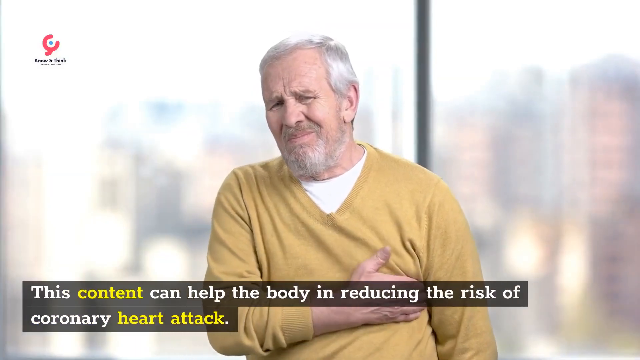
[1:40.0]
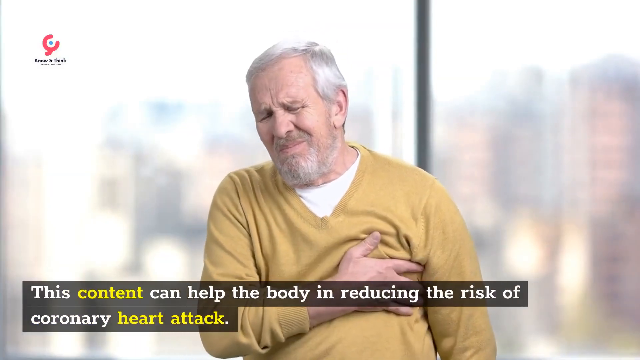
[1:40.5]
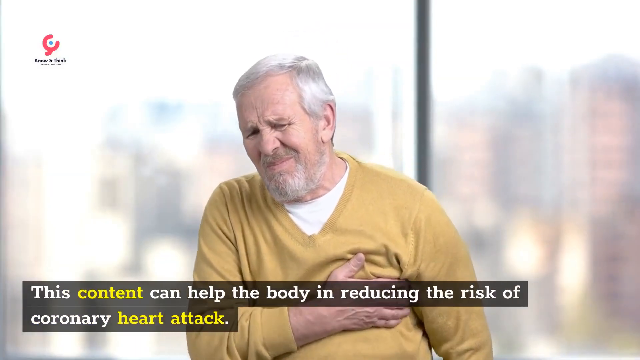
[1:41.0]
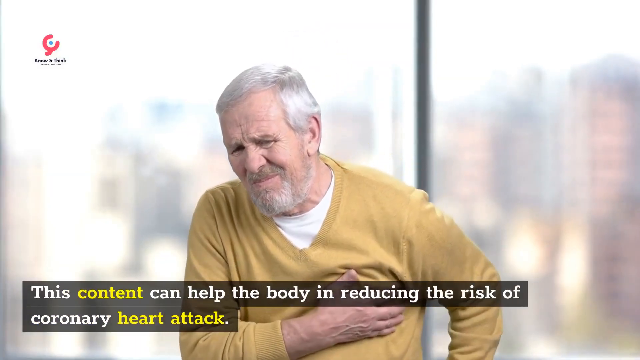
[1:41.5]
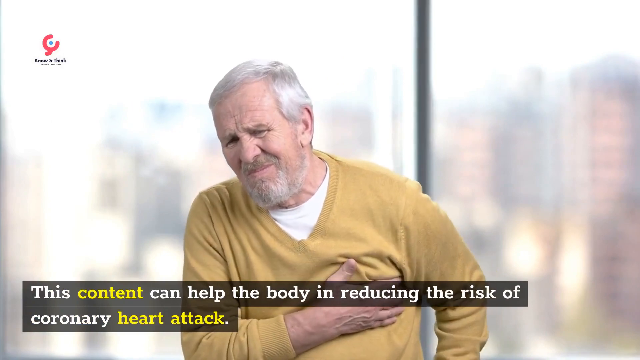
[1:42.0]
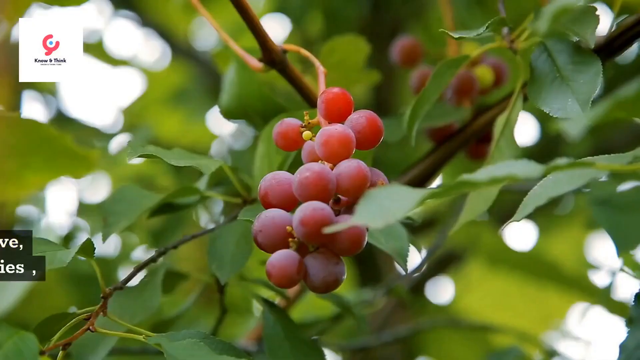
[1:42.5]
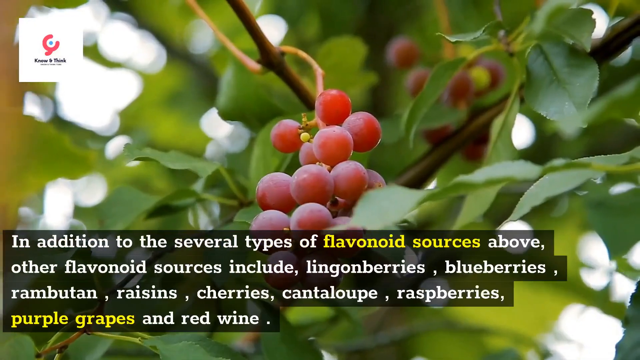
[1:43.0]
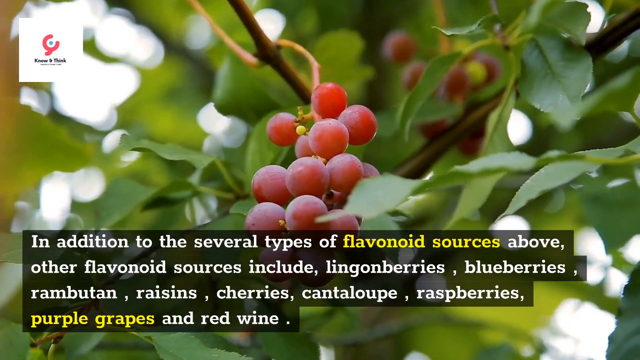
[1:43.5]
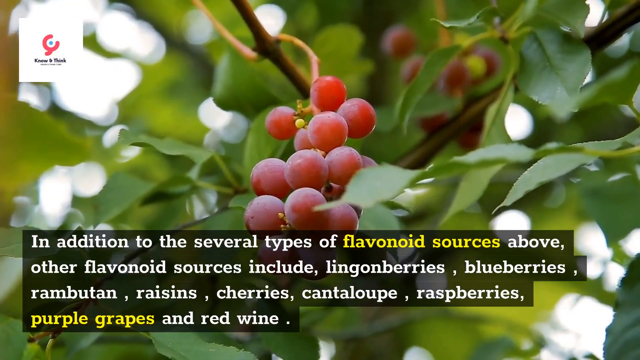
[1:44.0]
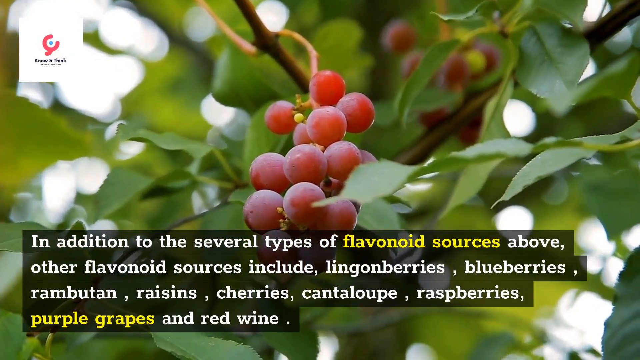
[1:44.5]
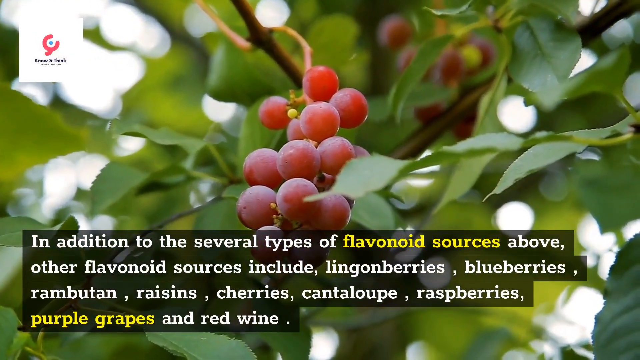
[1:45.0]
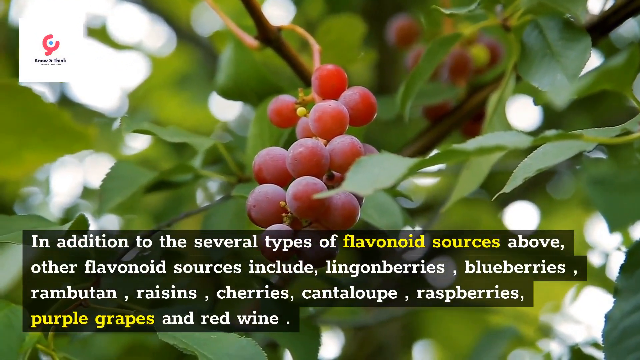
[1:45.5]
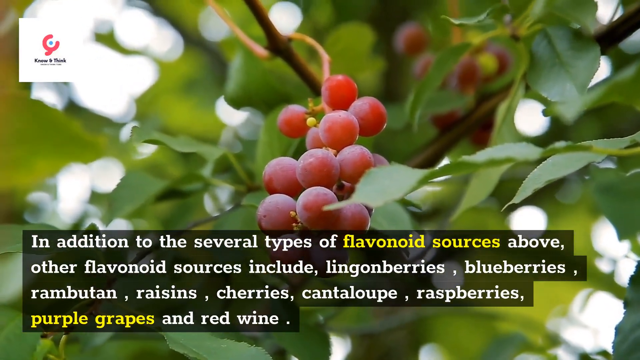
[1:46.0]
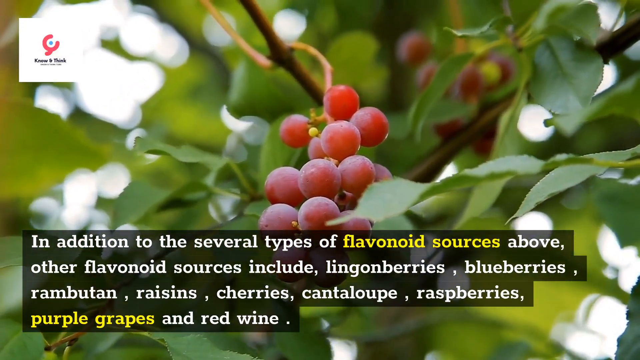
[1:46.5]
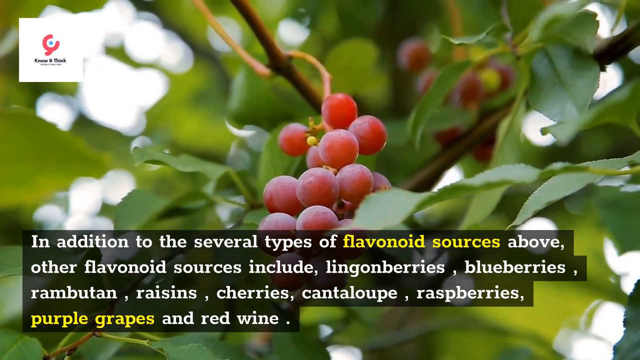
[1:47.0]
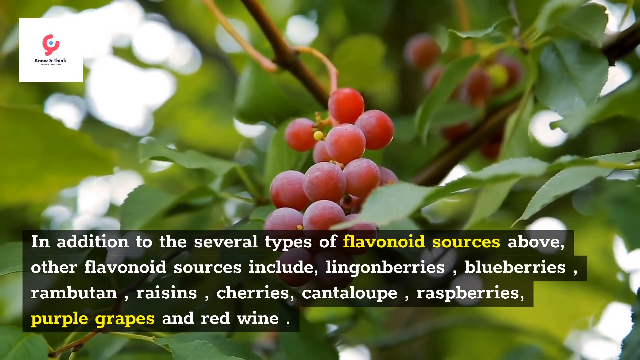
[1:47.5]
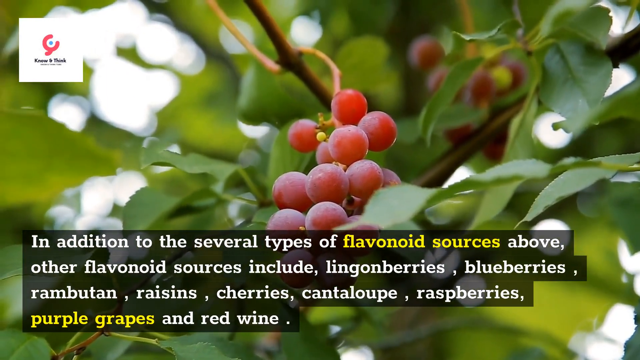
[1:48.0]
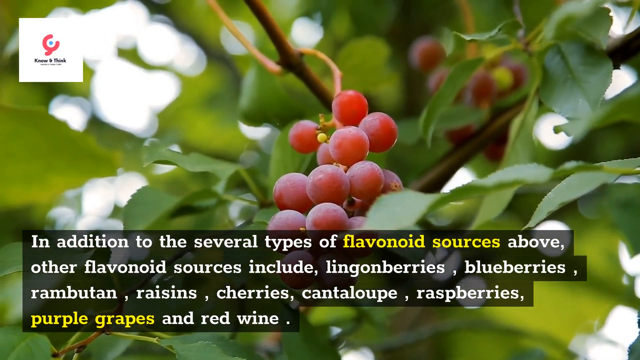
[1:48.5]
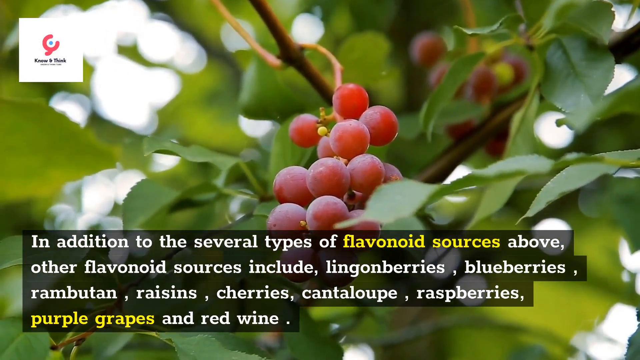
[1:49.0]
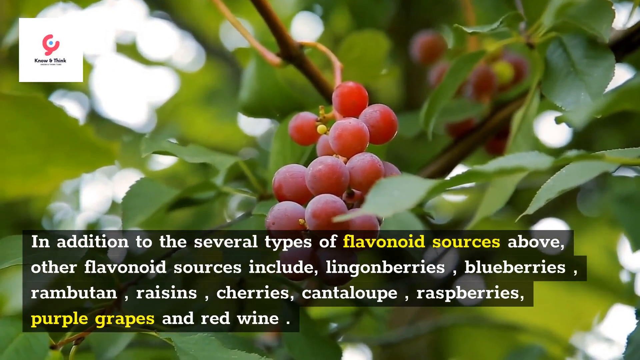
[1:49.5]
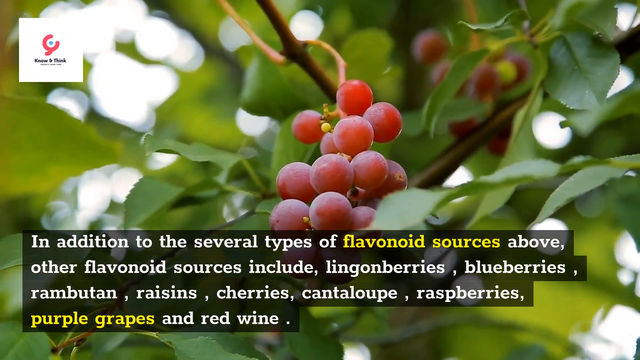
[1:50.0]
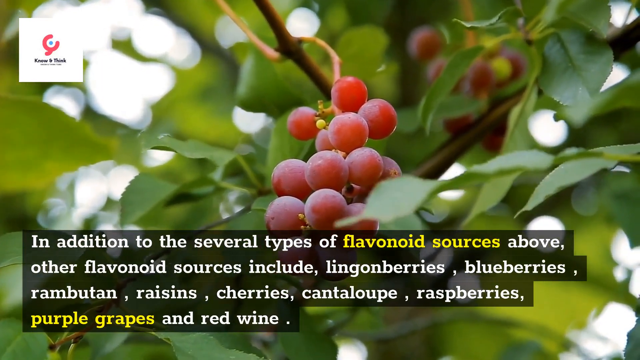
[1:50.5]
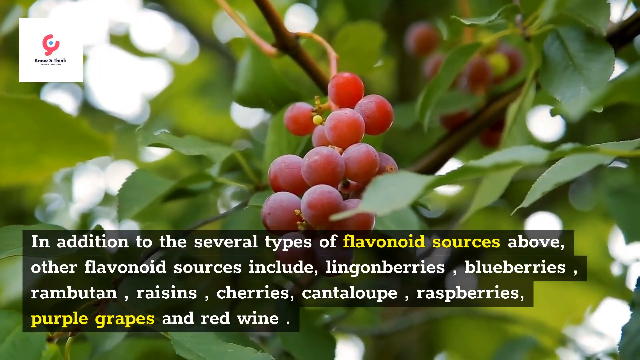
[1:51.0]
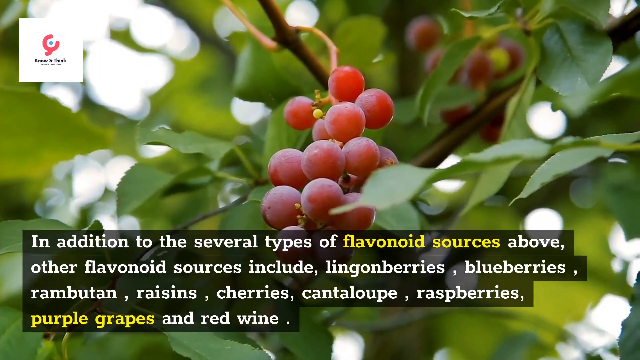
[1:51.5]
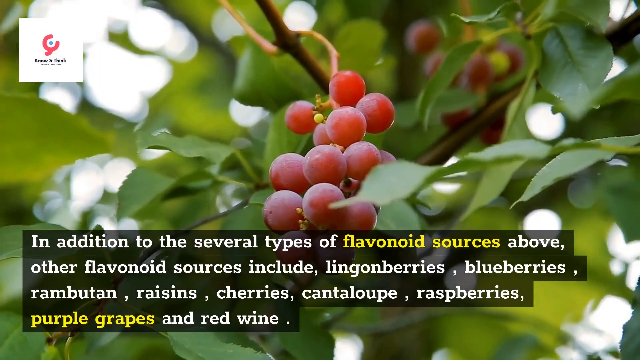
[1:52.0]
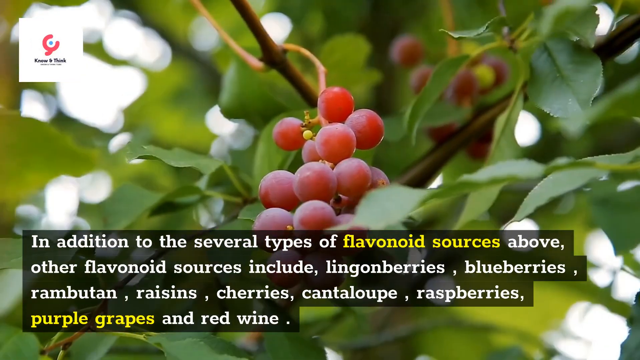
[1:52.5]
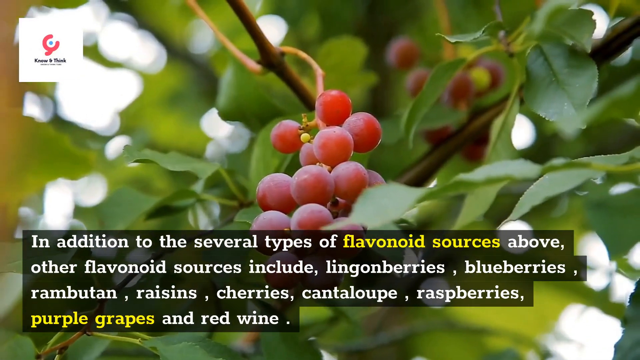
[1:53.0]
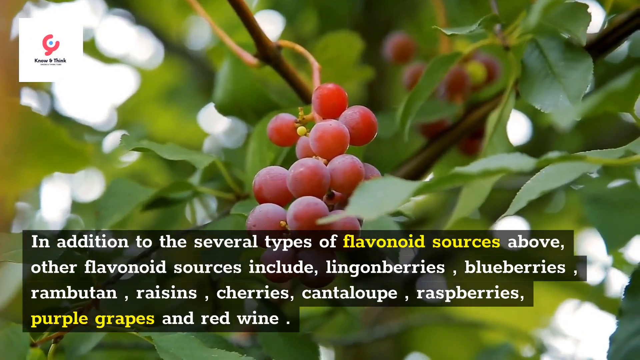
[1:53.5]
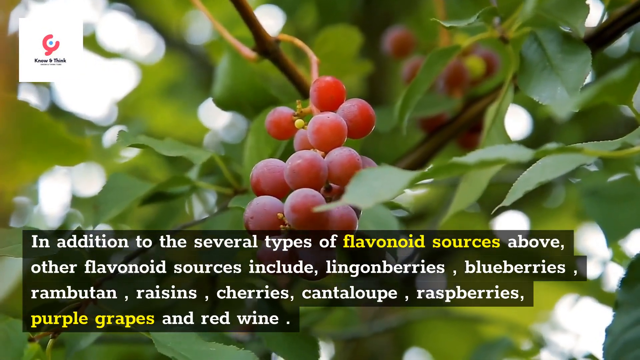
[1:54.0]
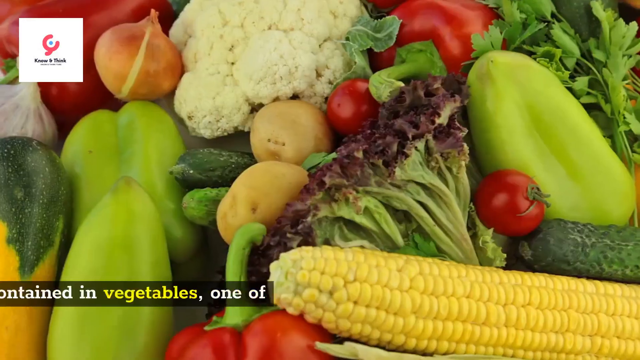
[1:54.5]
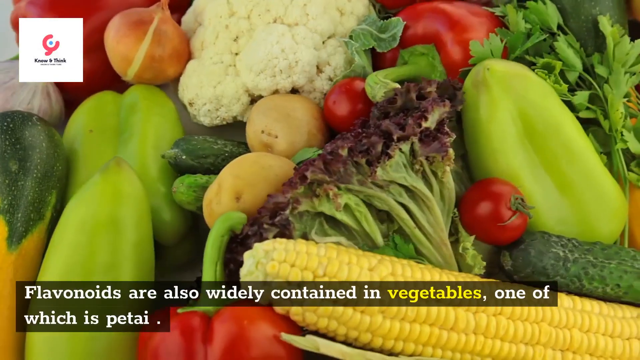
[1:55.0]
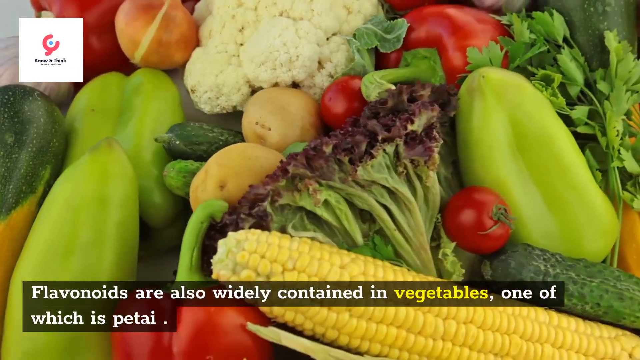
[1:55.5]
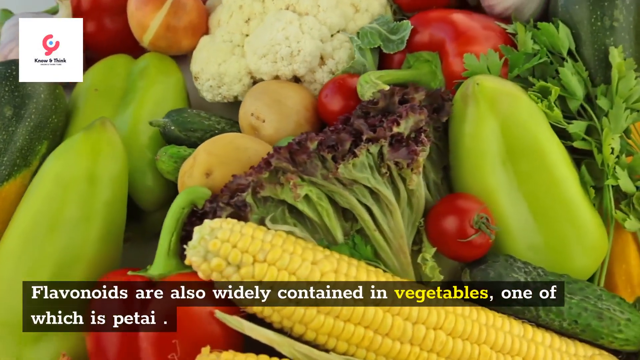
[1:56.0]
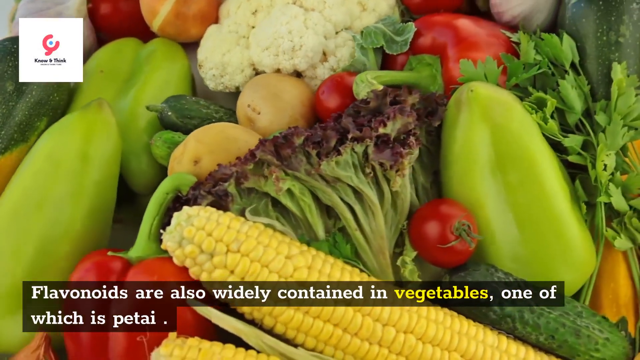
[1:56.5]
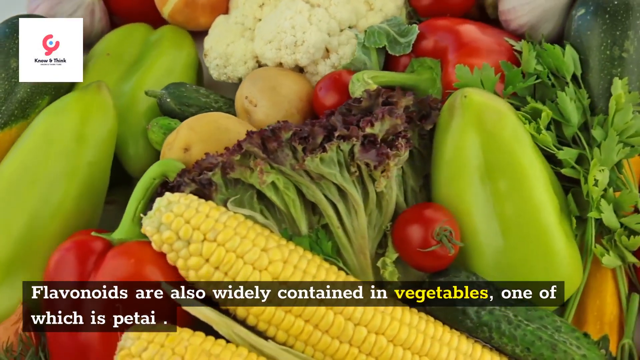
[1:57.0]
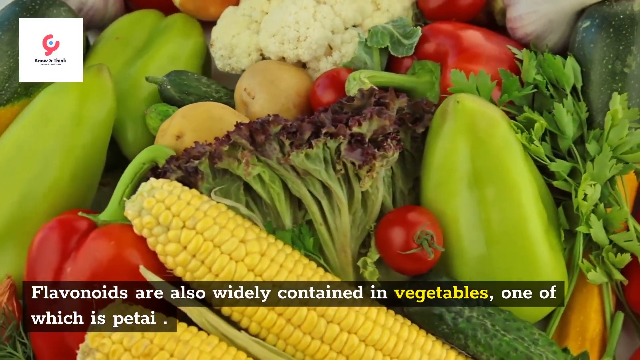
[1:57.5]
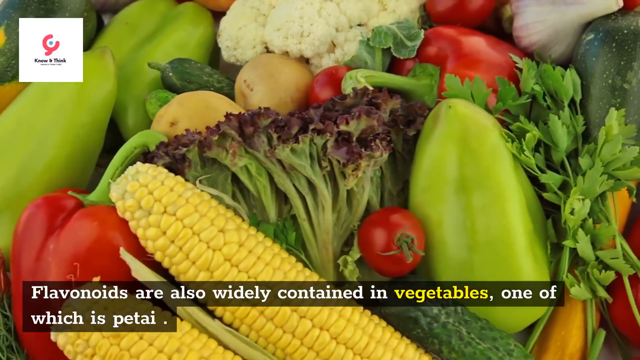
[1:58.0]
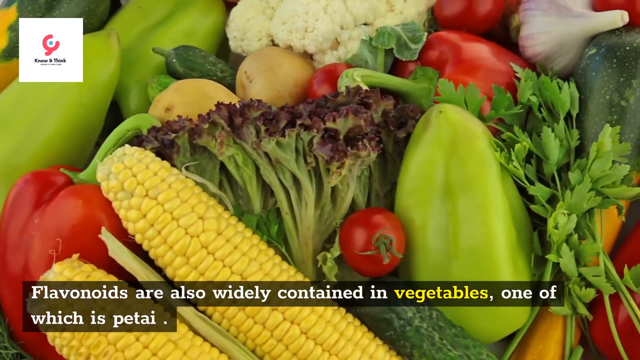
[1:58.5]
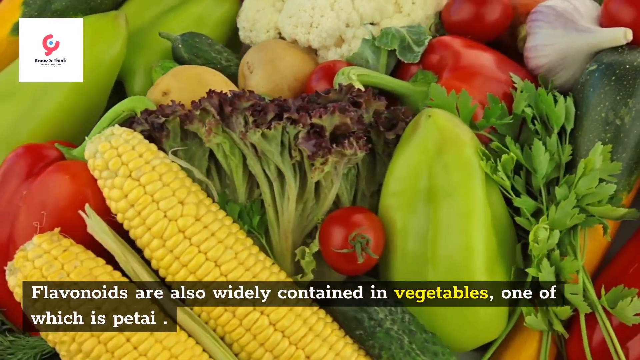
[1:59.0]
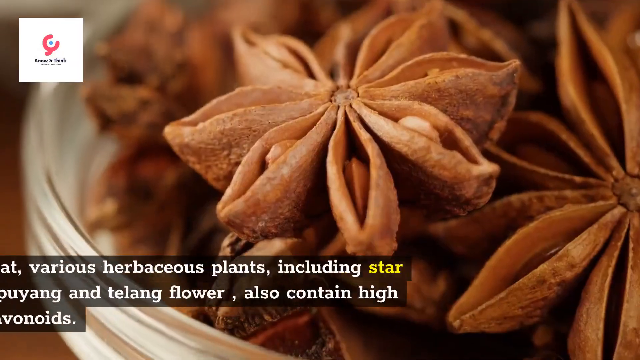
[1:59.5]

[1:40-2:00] An older white man in a doctor's office setting rubs his chest, with text stating that these fruits reduce the risk of heart attack. A transition shows a bushel of grapes on a vine, with an infographic at the bottom stating that other fruits such as lingonberries, blueberries, raisins, cherries and others are also sources of flavonoids. The grapes are a cross between red and purple with a lighter shade, hanging on a tree with a lot of green leaves and brown branches. The scene transitions to a collection of vegetables, with words at the bottom stating that they are also a source of flavonoids; tomatoes, peppers, cauliflower, cucumber and herbs are visible, and petai is also mentioned as a good source. The camera continues to rotate, showing a different angle of the vegetables.